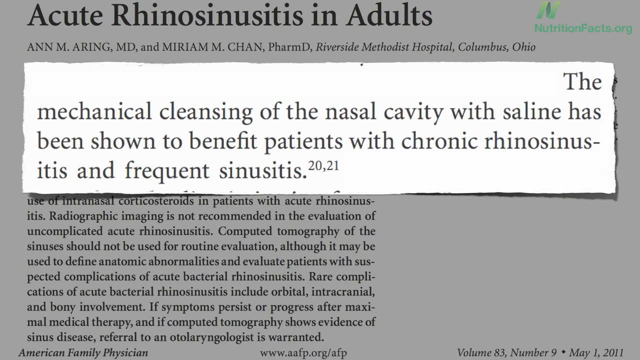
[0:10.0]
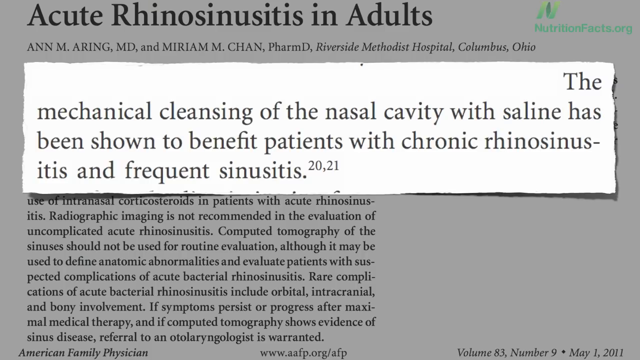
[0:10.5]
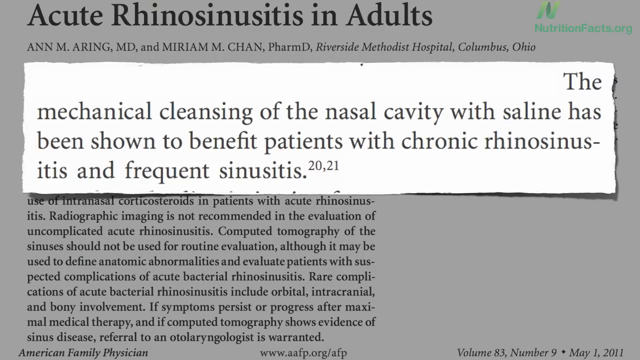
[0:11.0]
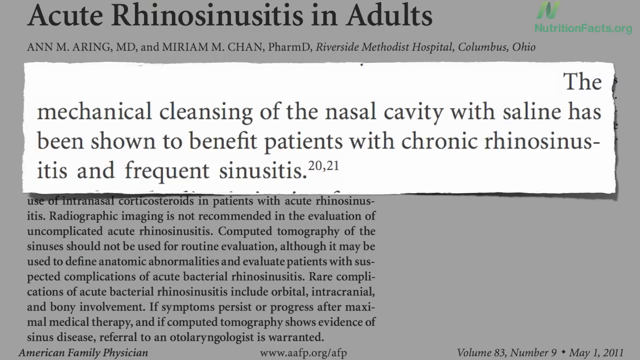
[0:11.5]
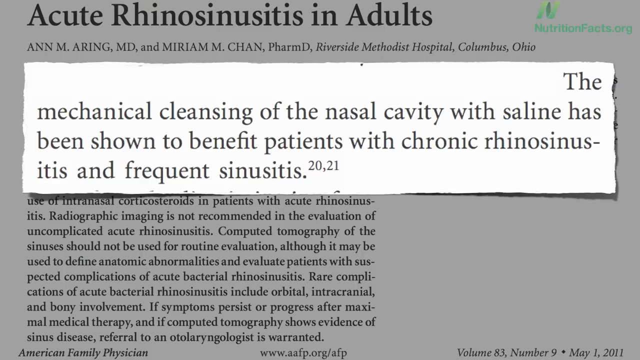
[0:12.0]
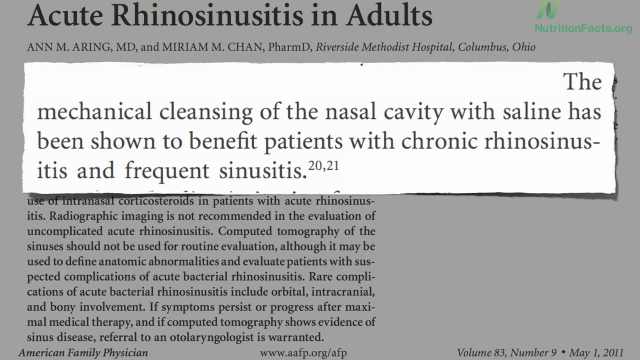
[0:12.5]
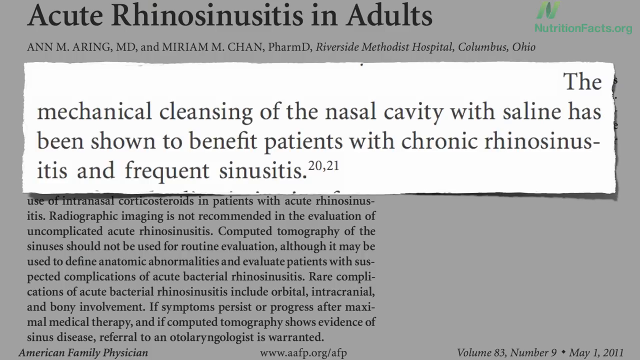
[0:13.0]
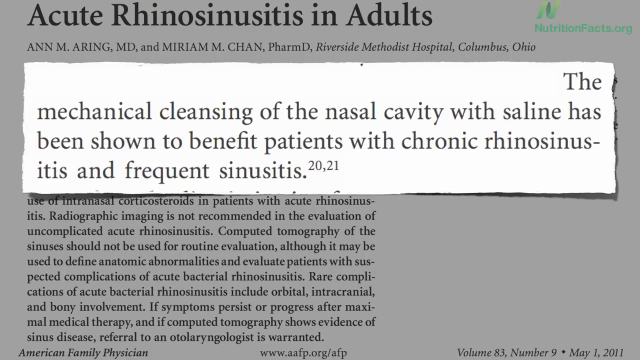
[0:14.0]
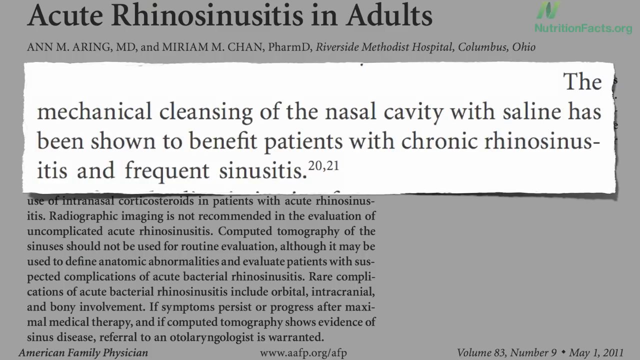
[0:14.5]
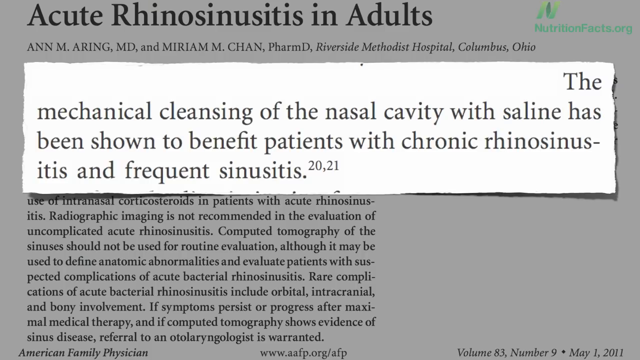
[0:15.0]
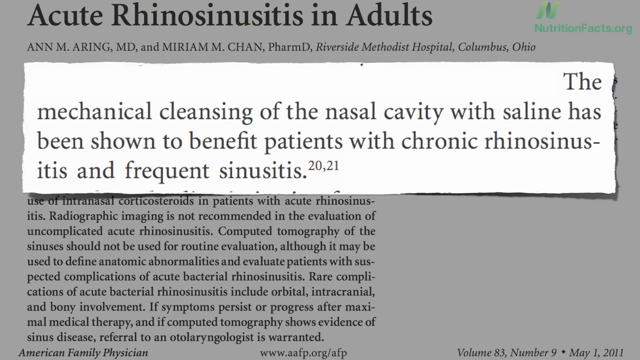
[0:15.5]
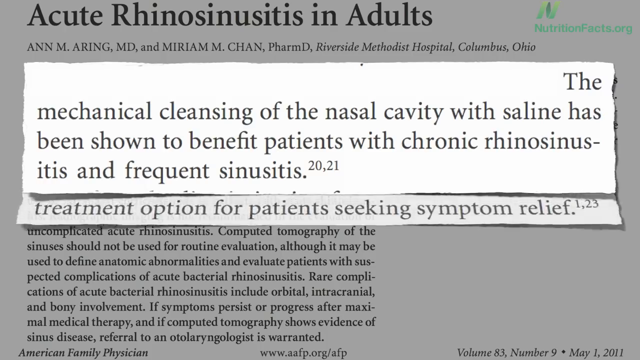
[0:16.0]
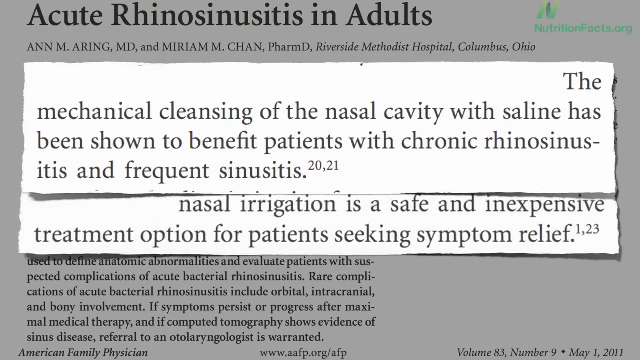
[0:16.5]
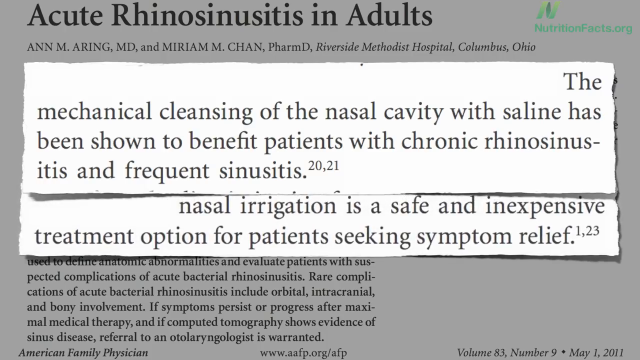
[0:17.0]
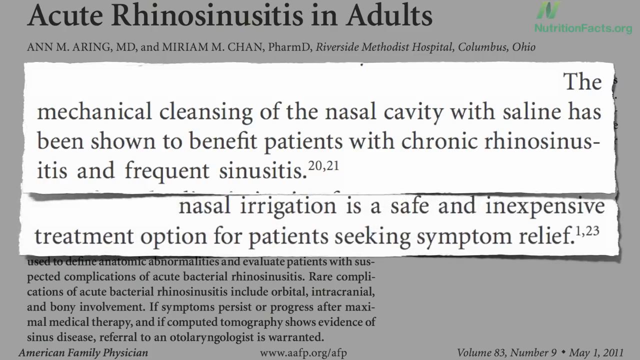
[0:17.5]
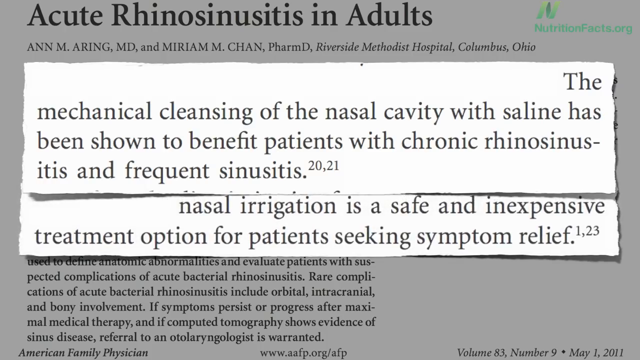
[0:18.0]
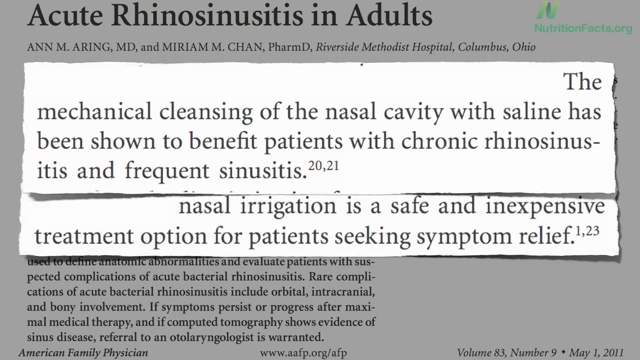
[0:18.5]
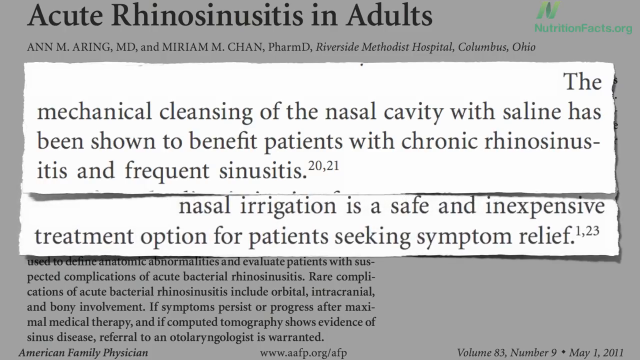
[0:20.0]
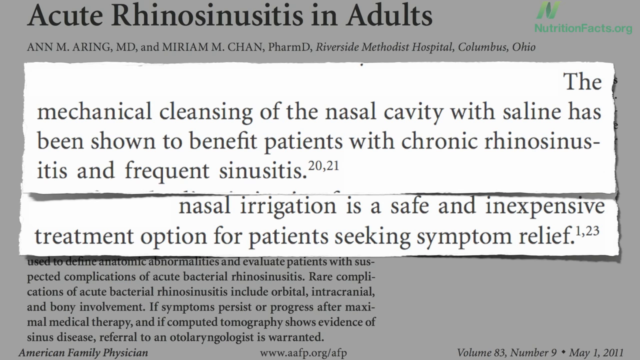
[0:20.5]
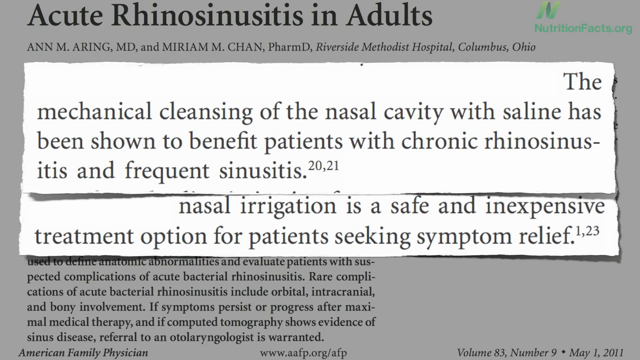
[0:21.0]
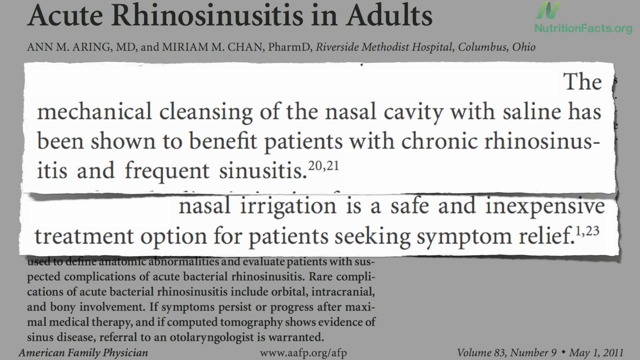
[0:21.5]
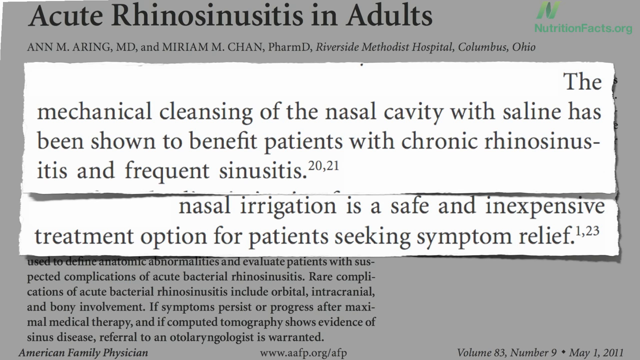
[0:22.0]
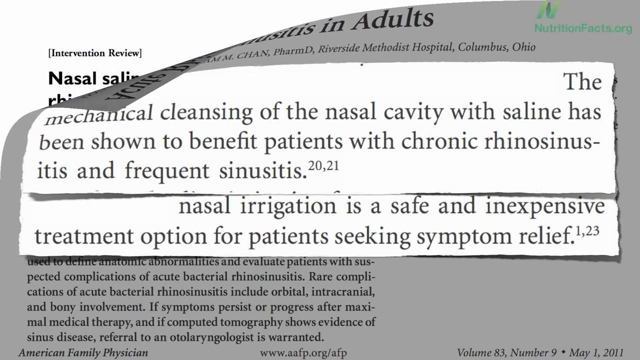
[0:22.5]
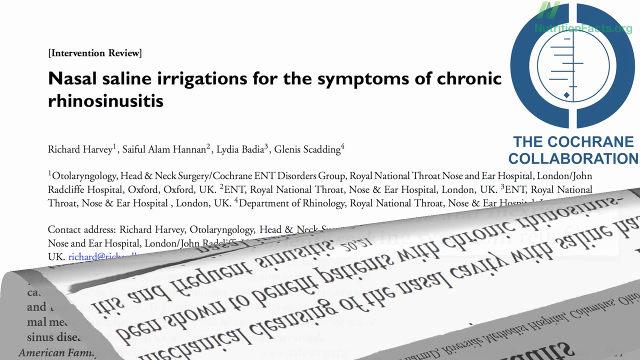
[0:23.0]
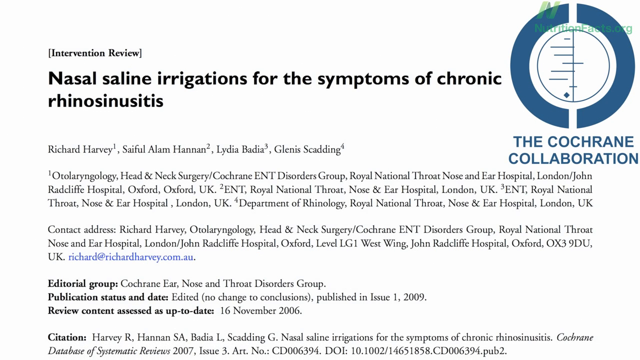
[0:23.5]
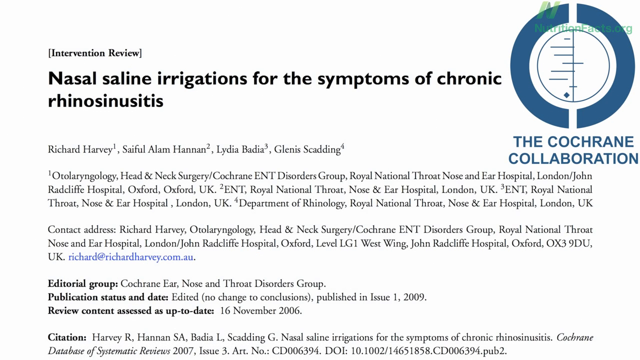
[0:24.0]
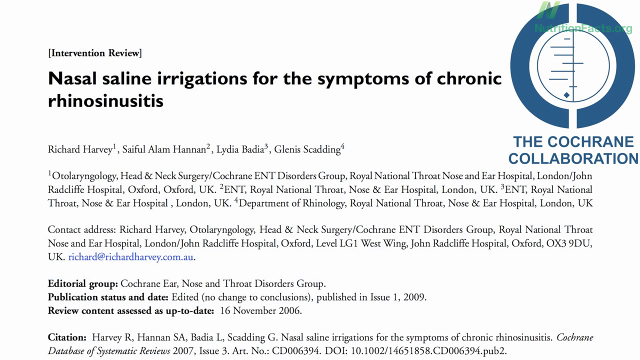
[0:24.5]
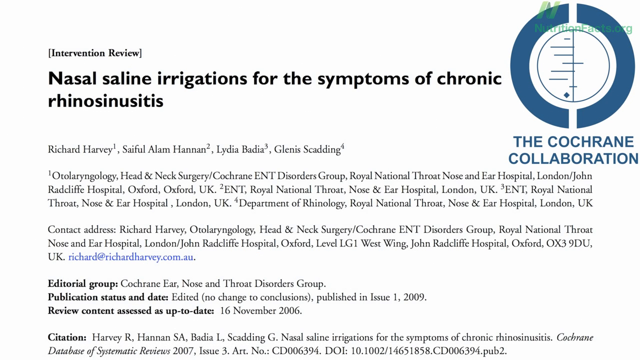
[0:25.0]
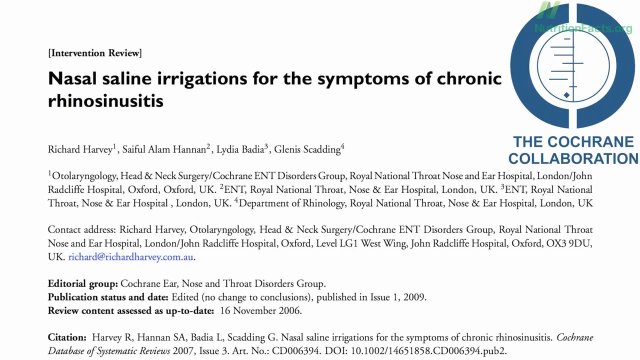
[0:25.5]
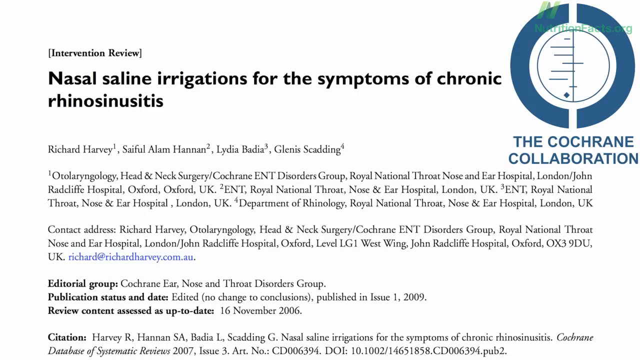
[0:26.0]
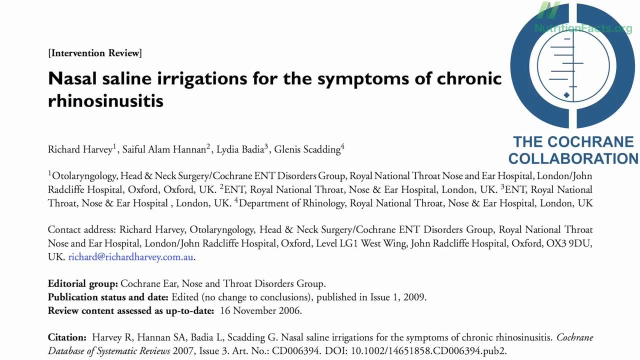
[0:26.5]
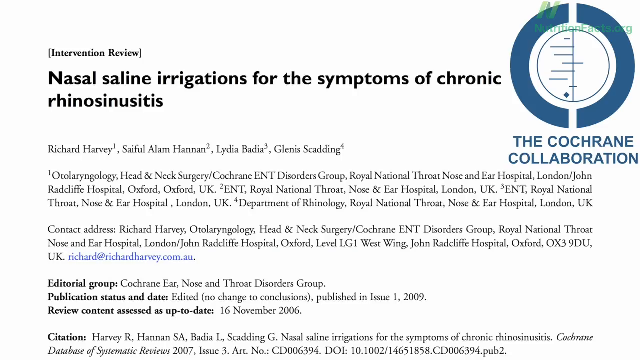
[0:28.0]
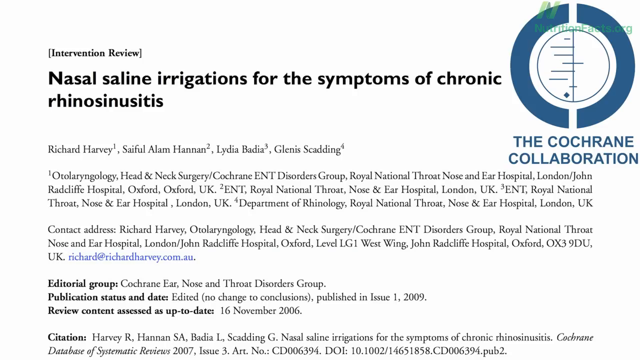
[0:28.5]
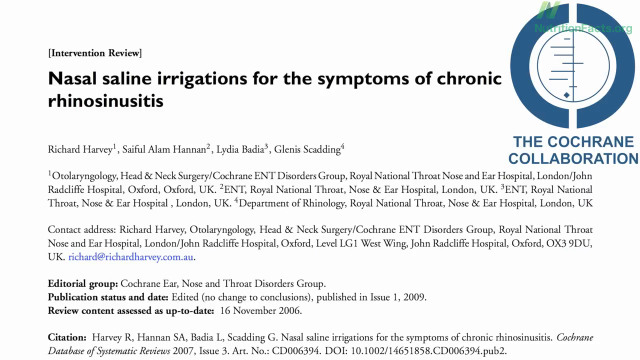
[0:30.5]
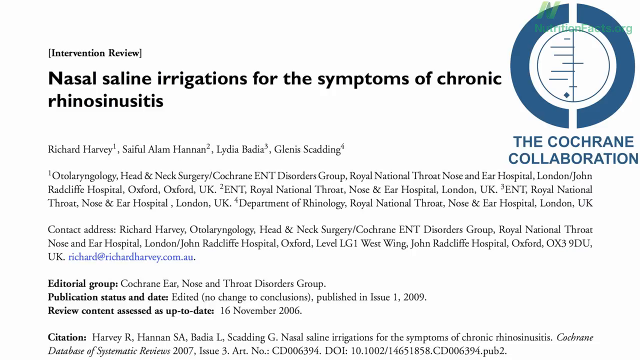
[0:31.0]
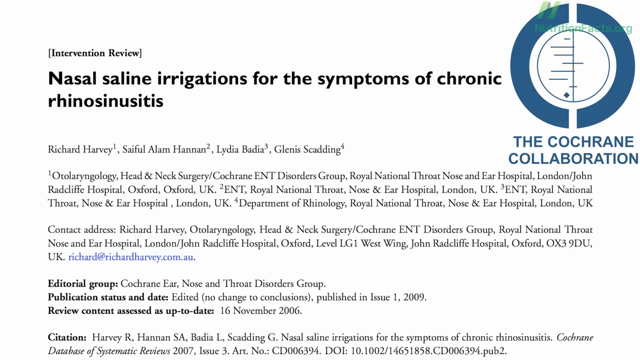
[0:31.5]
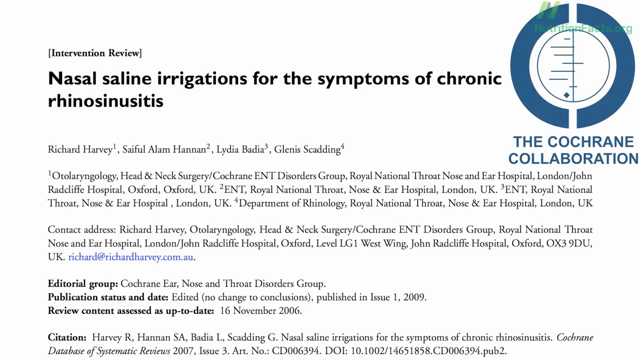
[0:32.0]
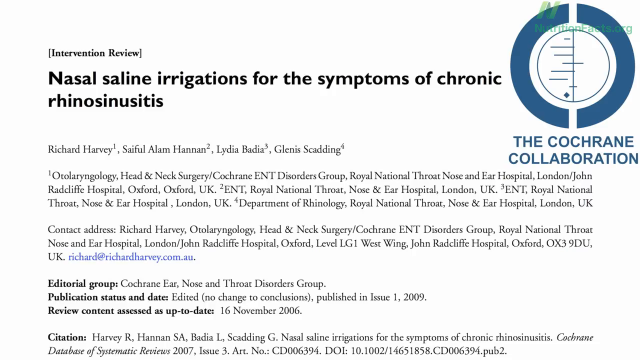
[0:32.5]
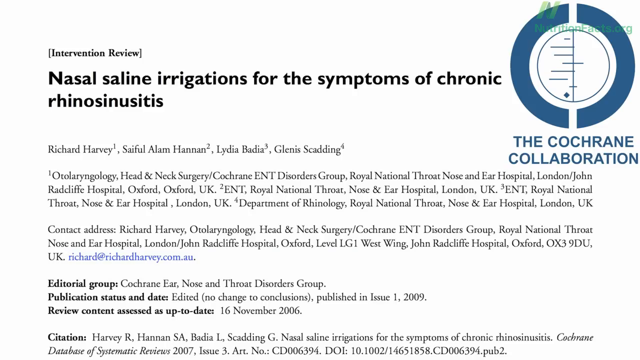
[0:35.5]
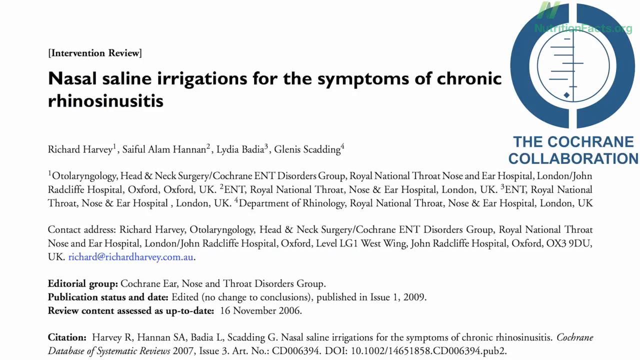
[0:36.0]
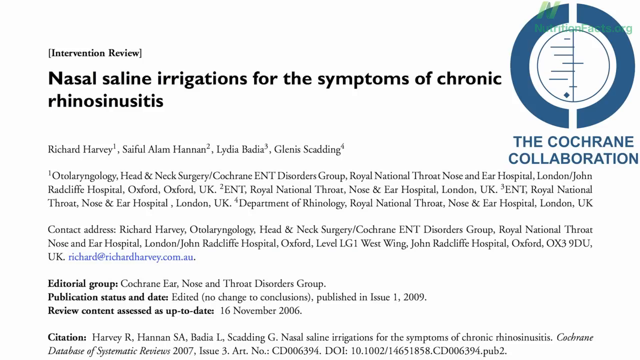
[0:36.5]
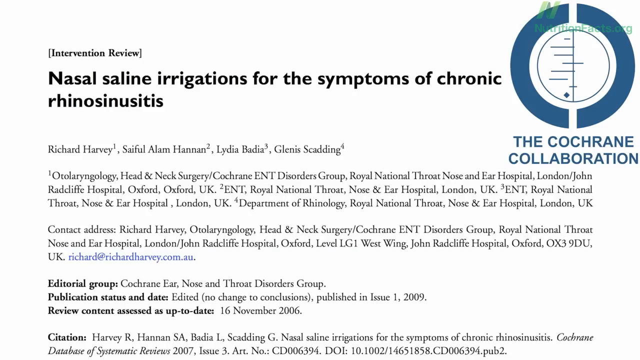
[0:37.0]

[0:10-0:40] An article about acute rhinosinusitis in adults is in the background, slightly shaded out, while a clipping is in the foreground. The clipping has a white background with black text and reads "the mechanical cleansing of the nasal cavity with saline has been shown to benefit patients with chronic rhinosinusitis and frequent sinusitis". The video focuses on this for several seconds before another clipping pops out from underneath it, reading "nasal irrigation is a safe and inexpensive treatment option for patients seeking symptom relief". This moves off the page, appearing to roll down from the upper left corner, revealing another document titled "Nasal Saline Irrigation for the Symptoms of Chronic Rhinosinusitis", written by the Cochrane Collaboration. The Cochrane logo is in the upper left corner: a dark green circle bisected vertically with several horizontal lines across the dividing line, surrounded by a much thicker circle.